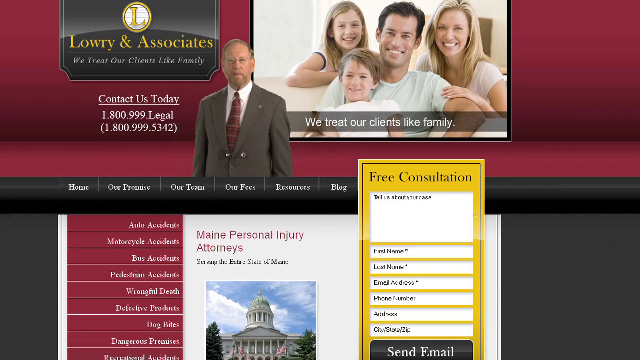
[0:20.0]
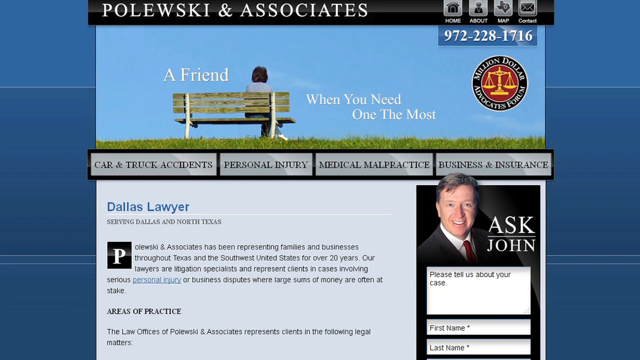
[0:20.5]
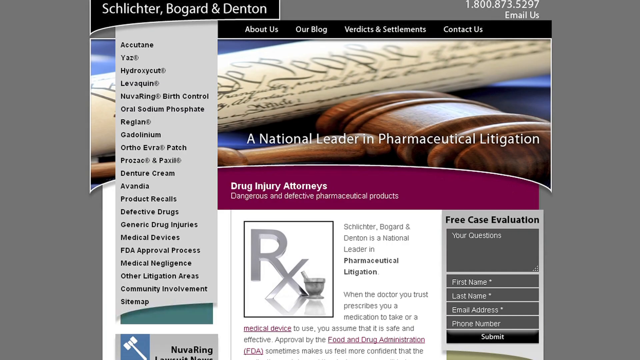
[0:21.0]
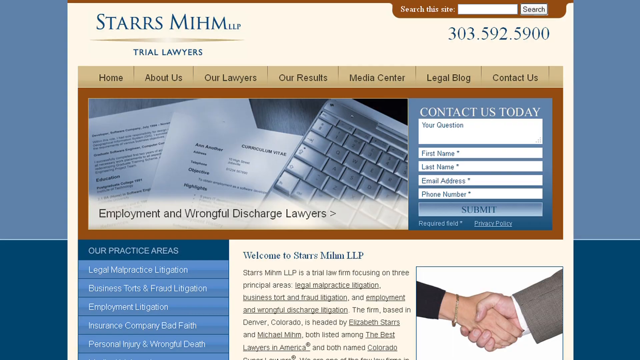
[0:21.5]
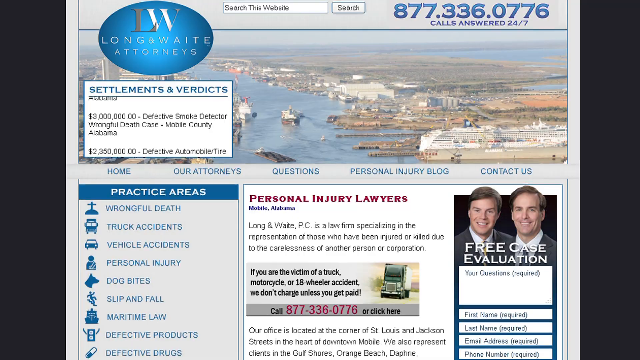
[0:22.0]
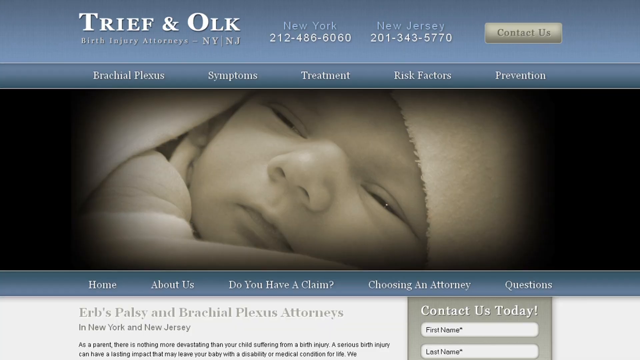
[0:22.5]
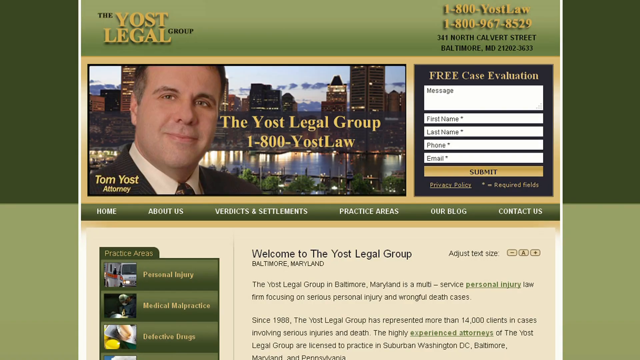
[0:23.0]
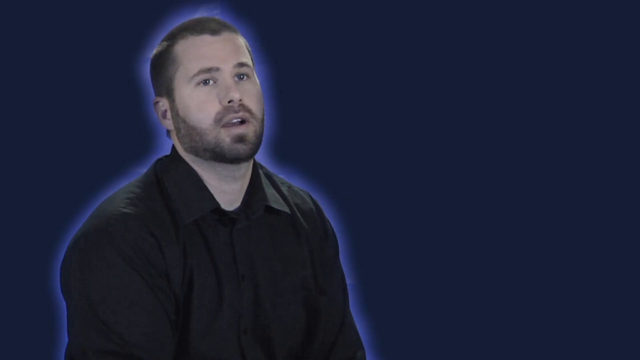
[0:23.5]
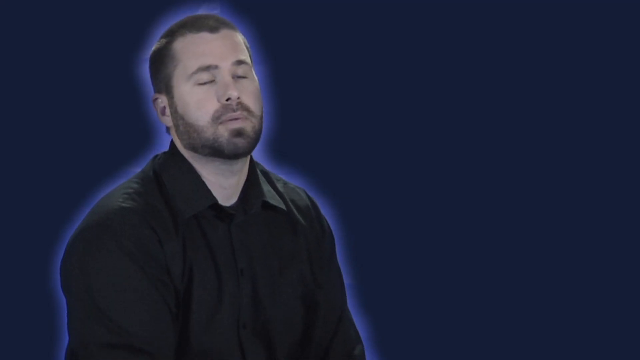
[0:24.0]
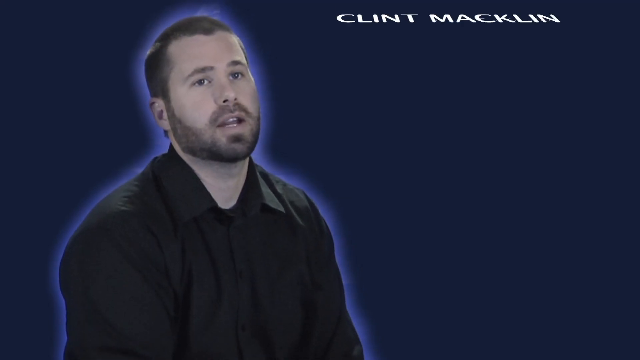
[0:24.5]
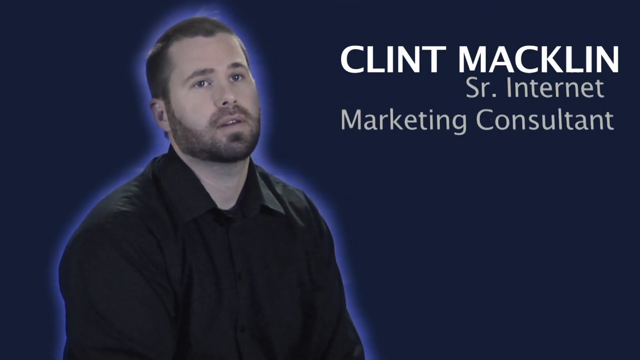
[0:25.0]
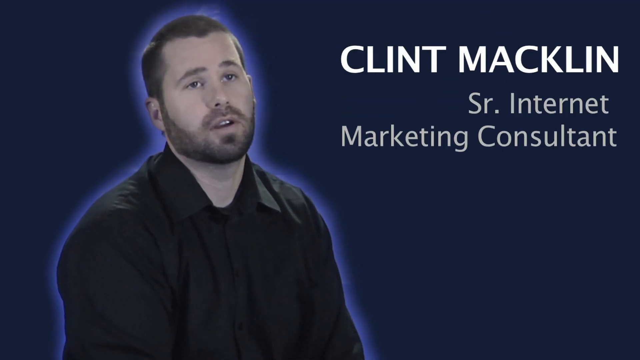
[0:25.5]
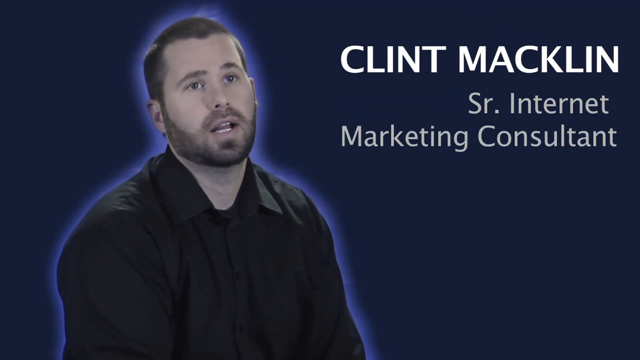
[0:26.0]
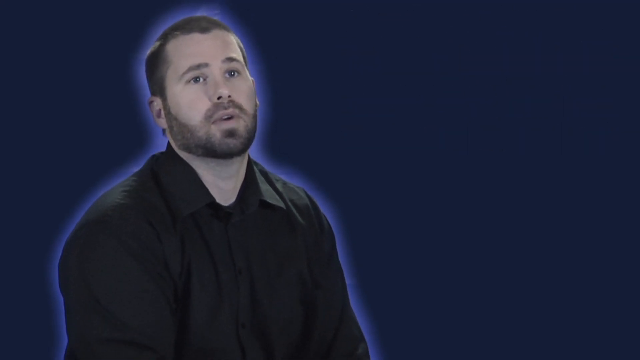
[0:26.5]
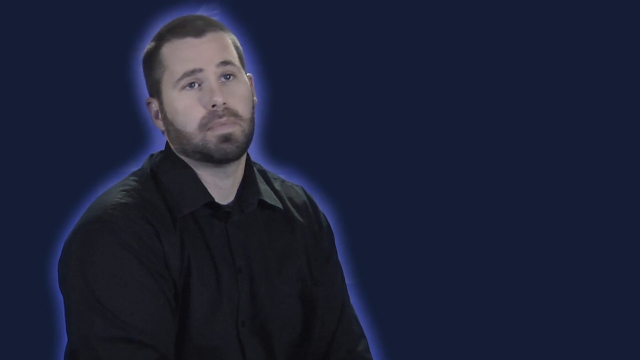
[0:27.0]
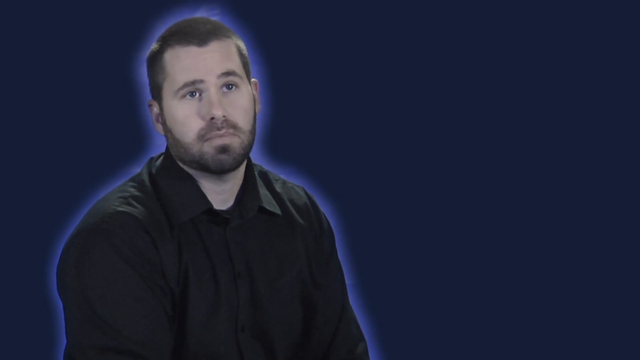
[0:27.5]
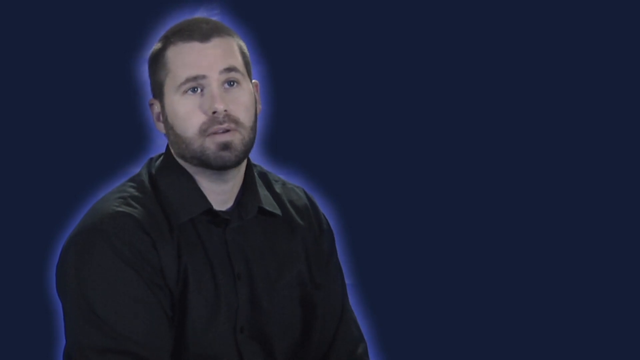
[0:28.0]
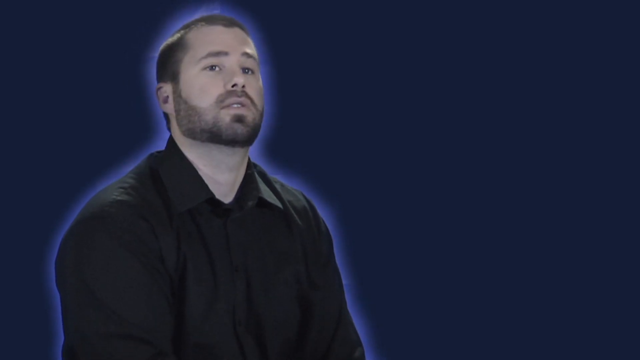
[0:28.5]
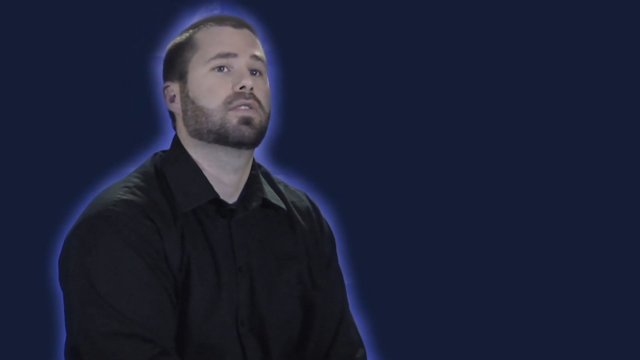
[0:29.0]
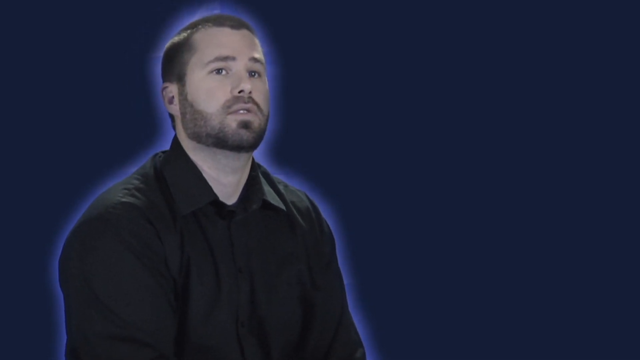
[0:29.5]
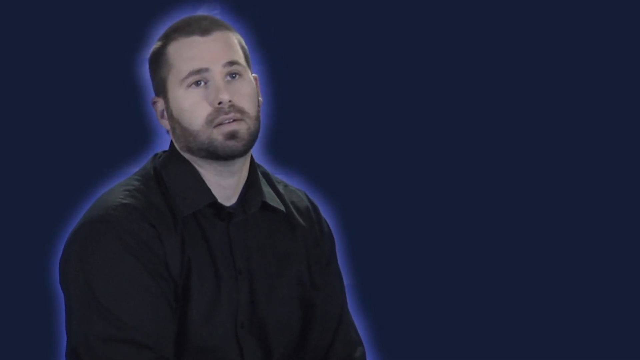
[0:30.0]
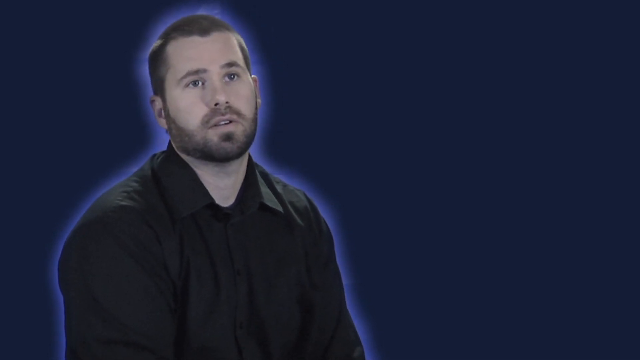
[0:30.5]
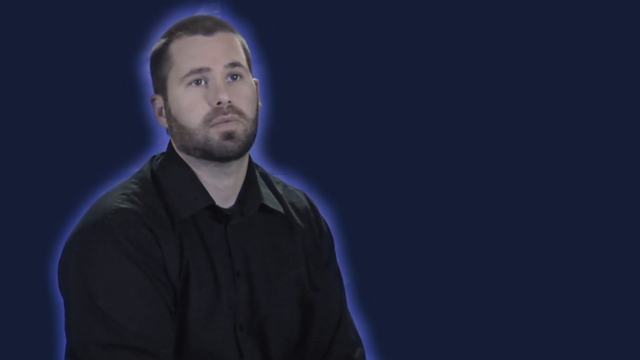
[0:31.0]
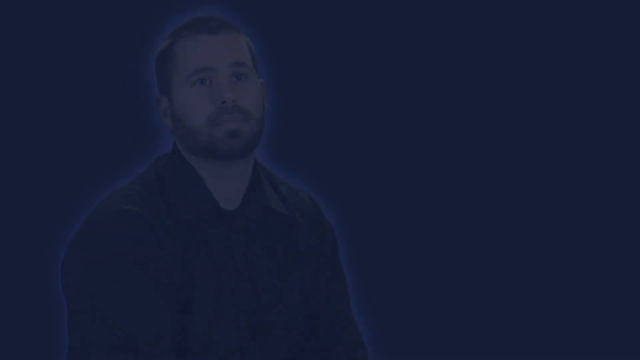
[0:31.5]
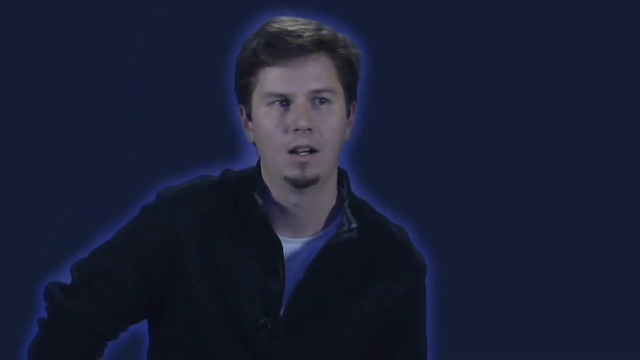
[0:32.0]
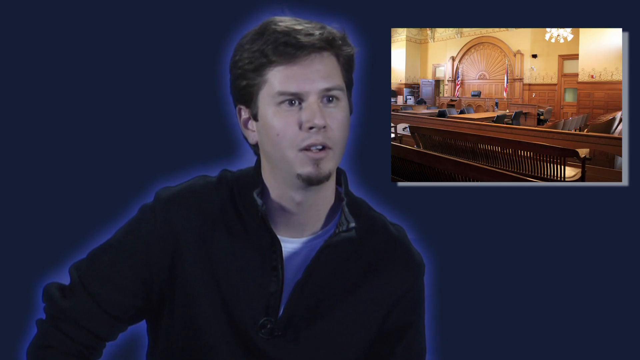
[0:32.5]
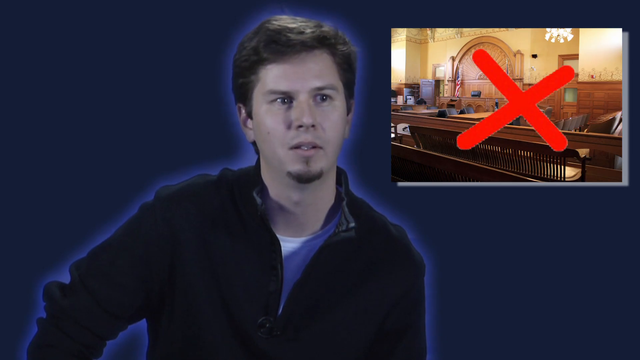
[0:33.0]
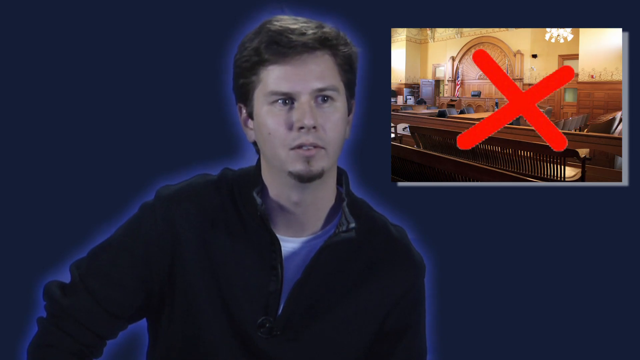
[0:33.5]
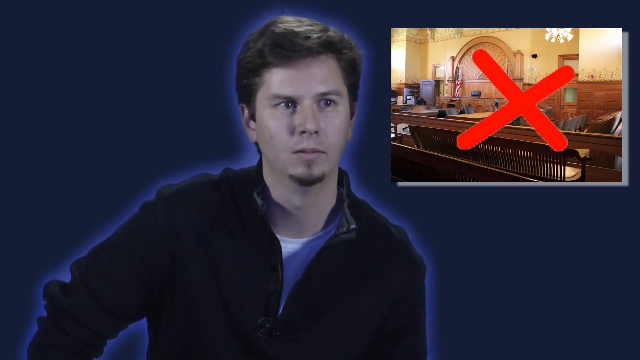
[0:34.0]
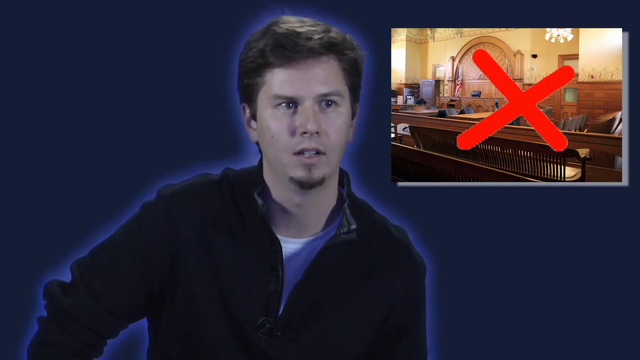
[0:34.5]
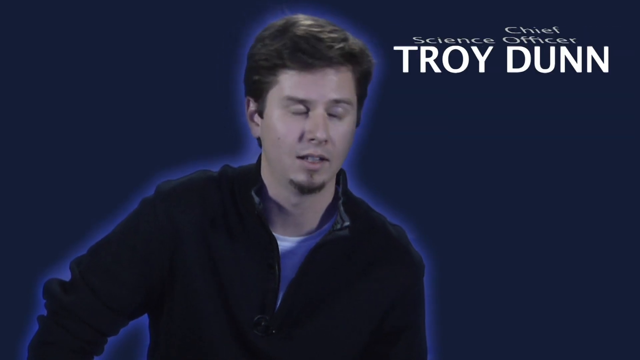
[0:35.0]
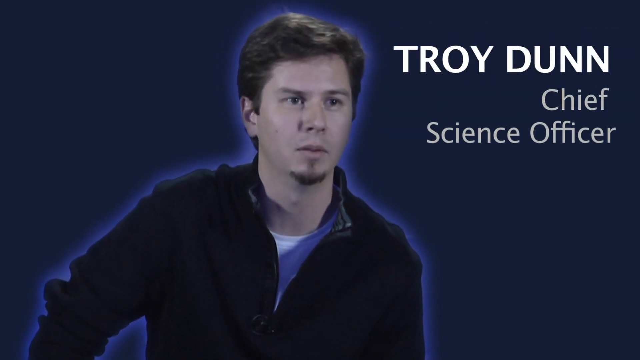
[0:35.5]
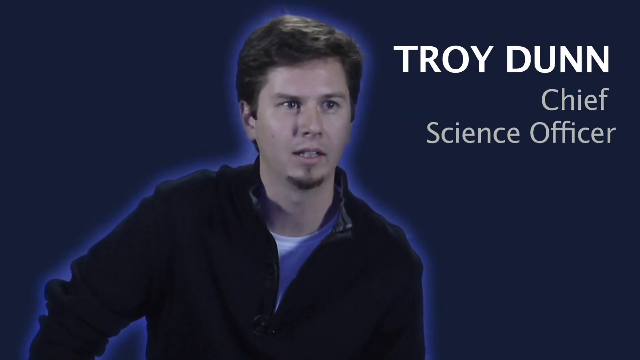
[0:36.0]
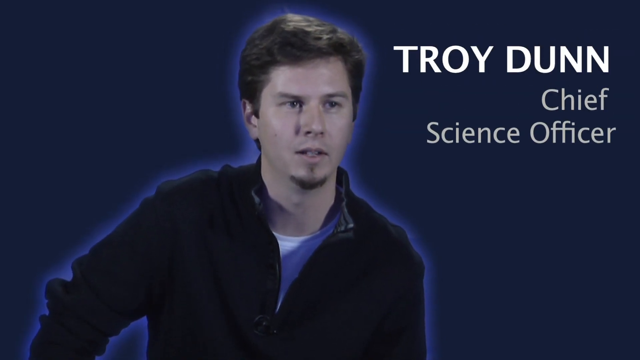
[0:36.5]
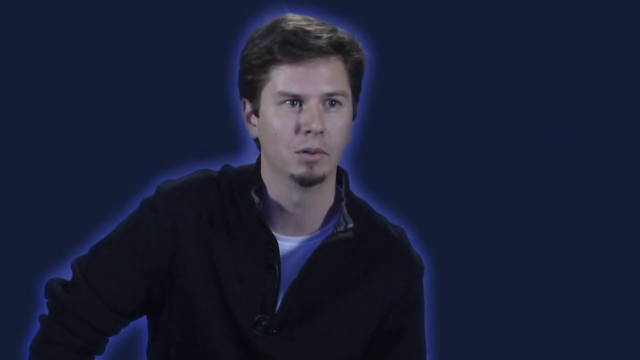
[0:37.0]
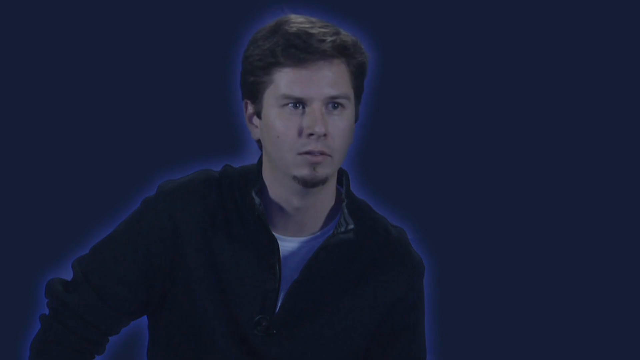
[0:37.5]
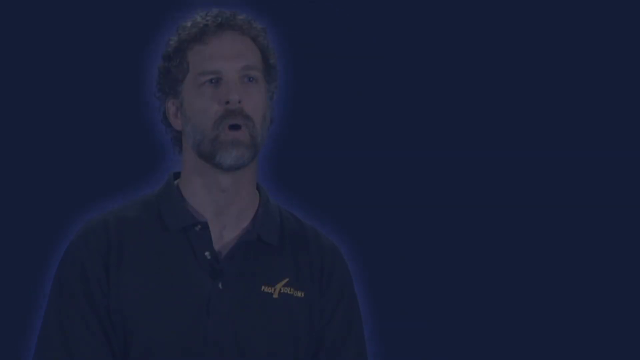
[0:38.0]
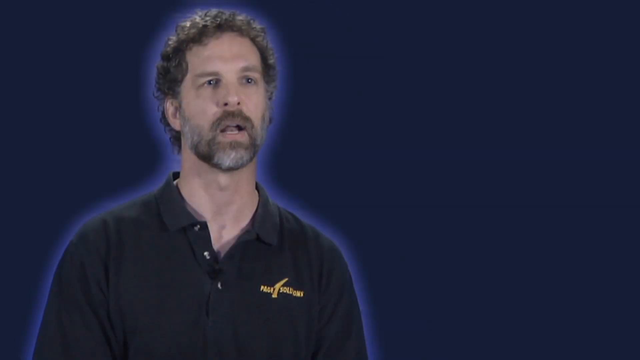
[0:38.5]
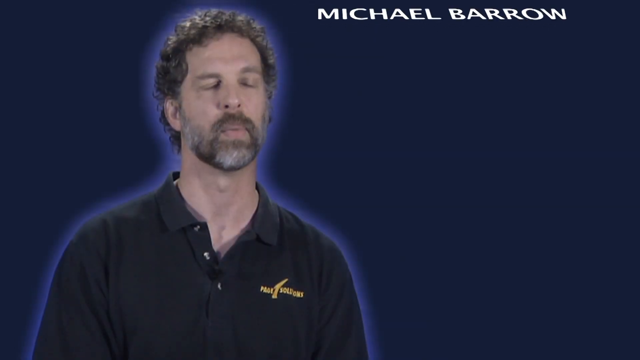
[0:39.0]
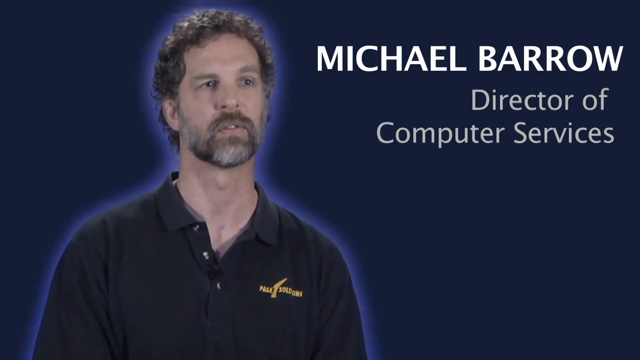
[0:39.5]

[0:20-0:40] Different law firms' pages flash on the screen very quickly, including ones showing a baby and ones showing buildings. A man then appears sitting on the left with the text "Clint Macklin senior internet marketing consultant." He has brown hair and a brown beard cut very short, with a mustache and slight beard. He is talking, surrounded by a blue glow like the other men that makes him stand out, and turns his head slightly. The video cuts to another man with brown hair, labeled "Troy Dunn chief science officer," who has a tiny bit of hair in the middle of the bottom of his chin; he is also surrounded by the blue glow. Next comes "Michael Barrow director of computer services," who has curly brown hair and facial hair, a mustache and a beard, with the chin area of the beard more gray.